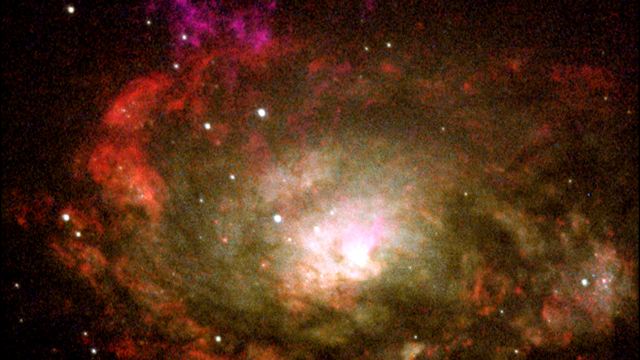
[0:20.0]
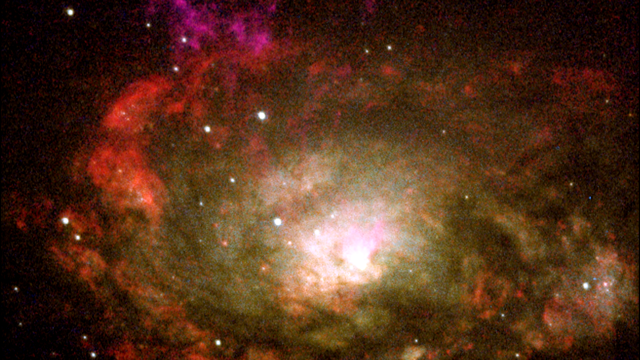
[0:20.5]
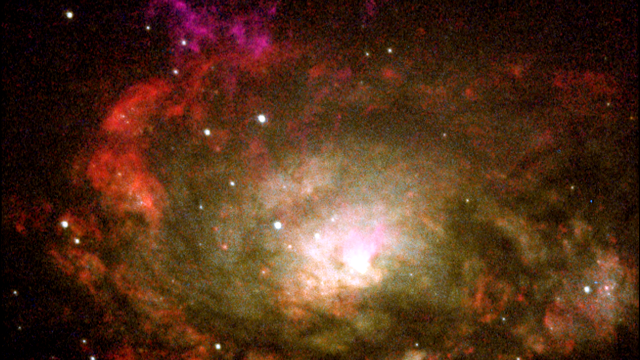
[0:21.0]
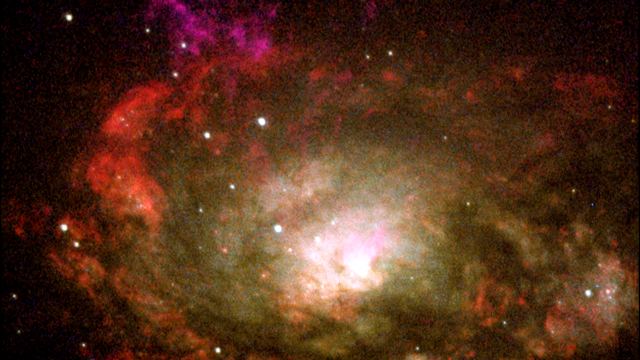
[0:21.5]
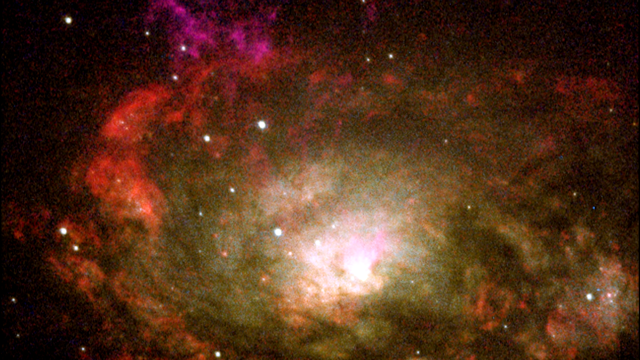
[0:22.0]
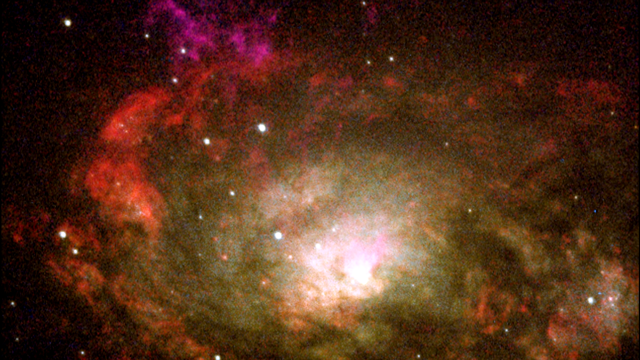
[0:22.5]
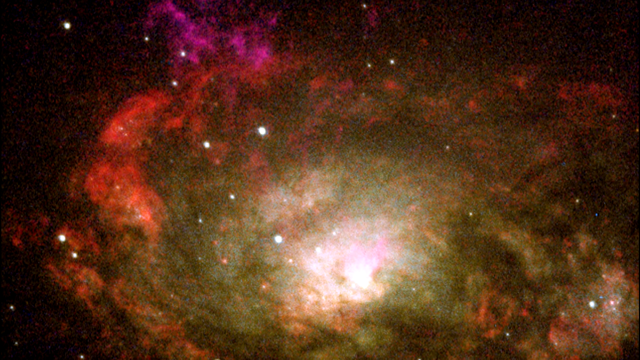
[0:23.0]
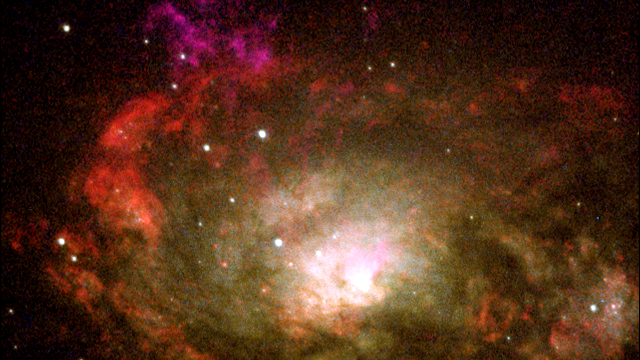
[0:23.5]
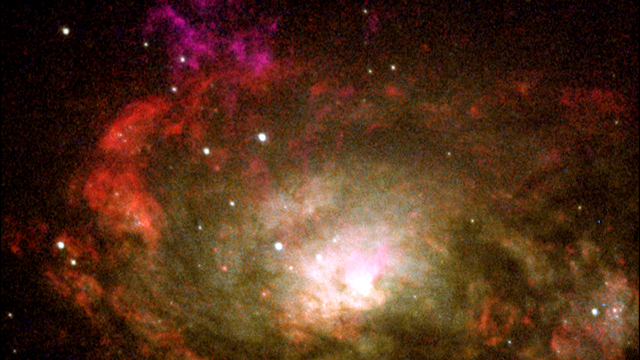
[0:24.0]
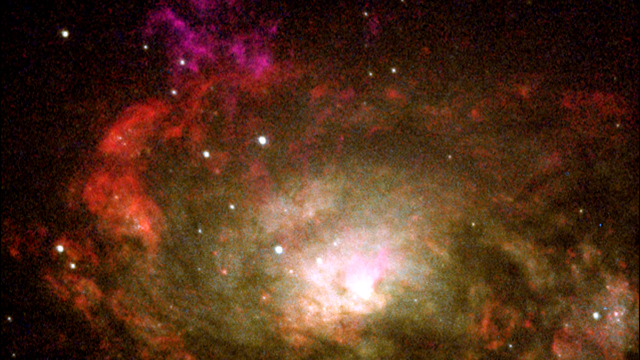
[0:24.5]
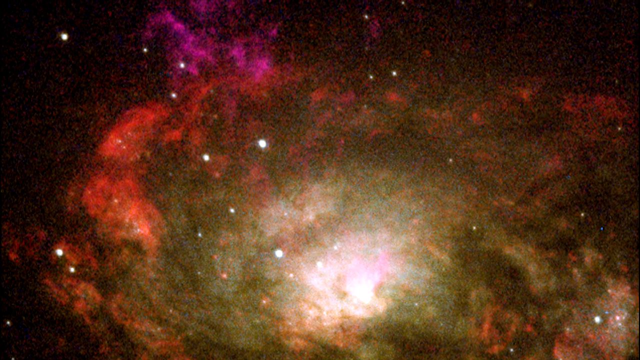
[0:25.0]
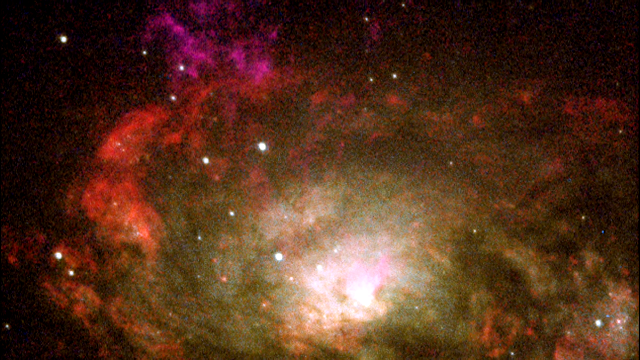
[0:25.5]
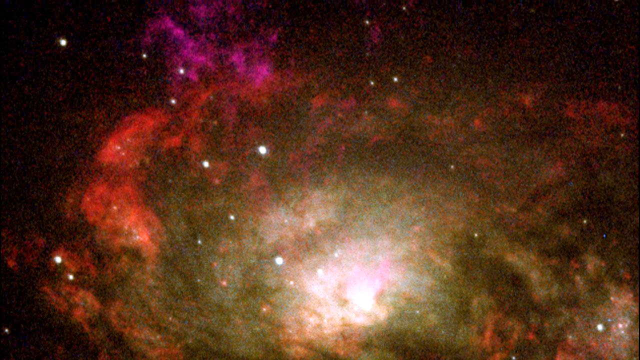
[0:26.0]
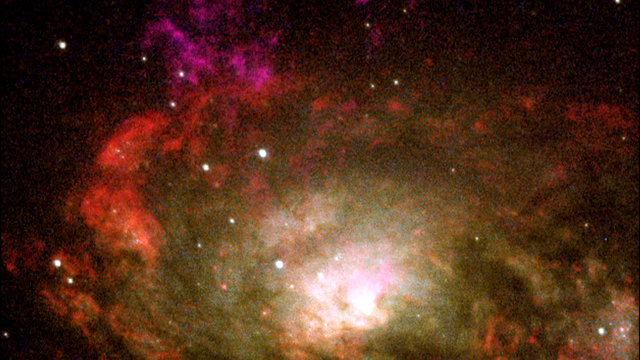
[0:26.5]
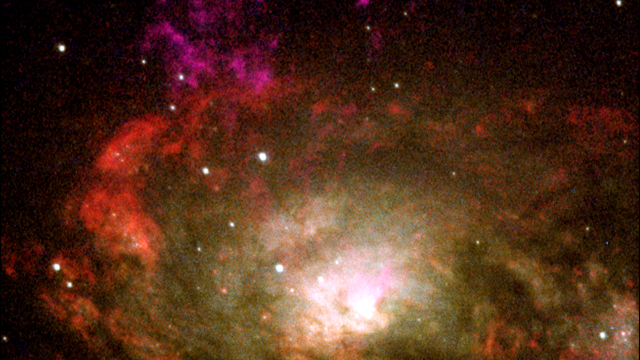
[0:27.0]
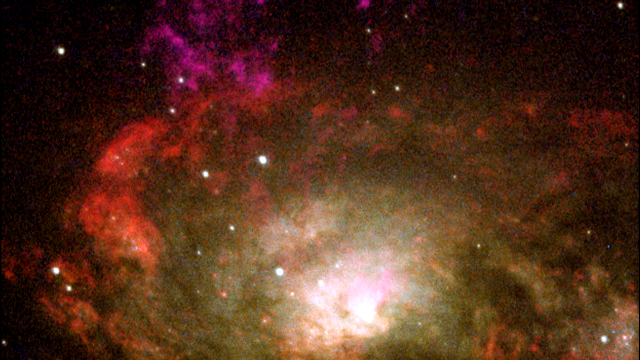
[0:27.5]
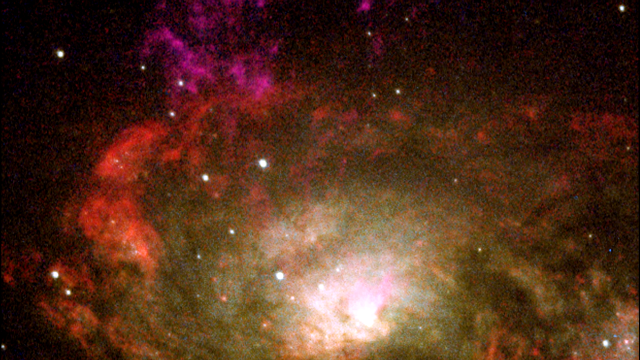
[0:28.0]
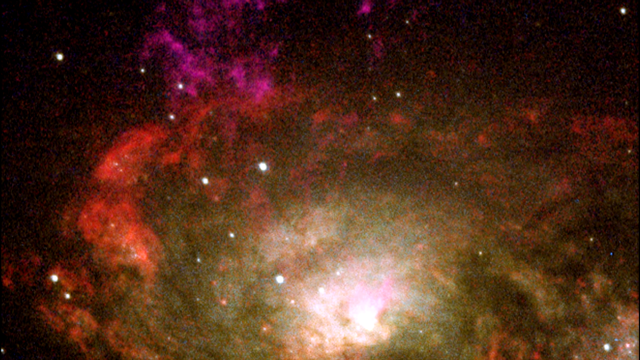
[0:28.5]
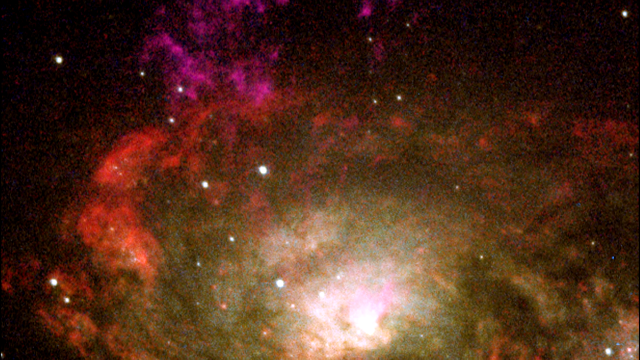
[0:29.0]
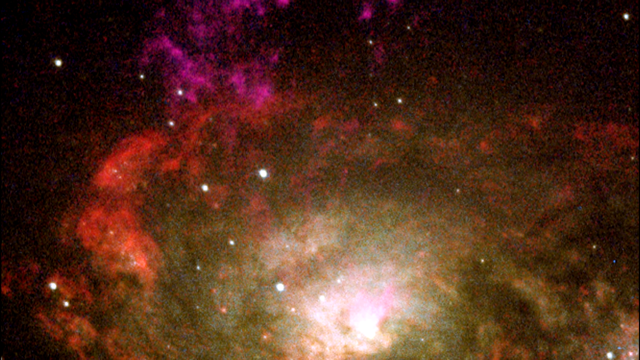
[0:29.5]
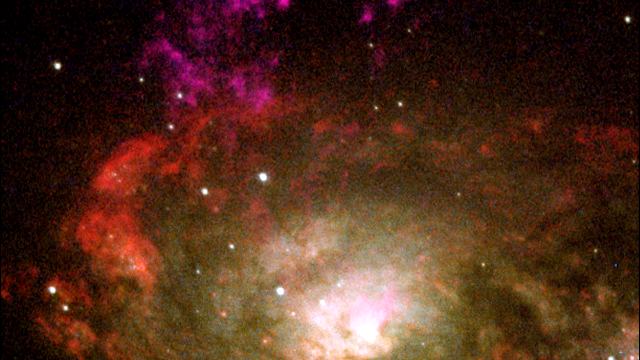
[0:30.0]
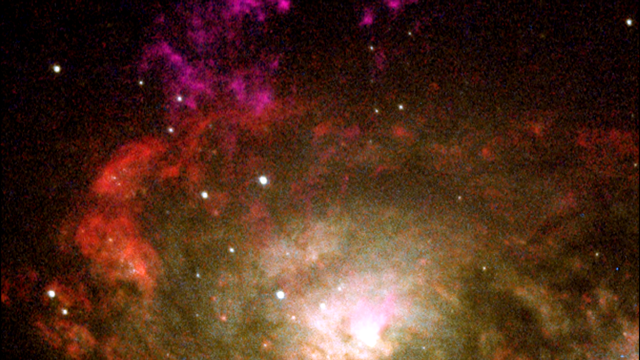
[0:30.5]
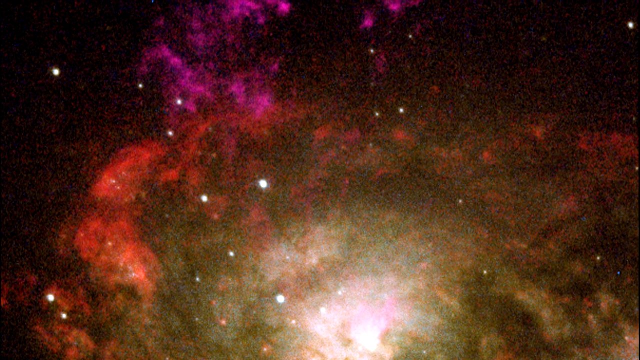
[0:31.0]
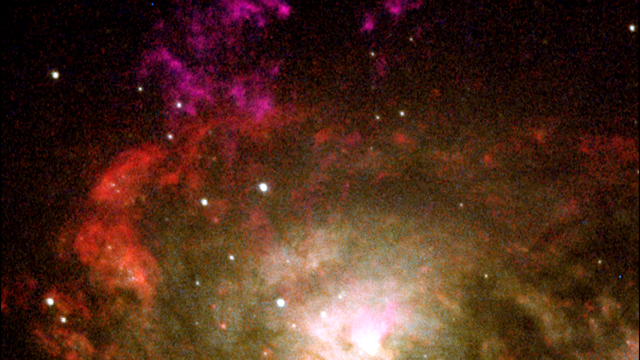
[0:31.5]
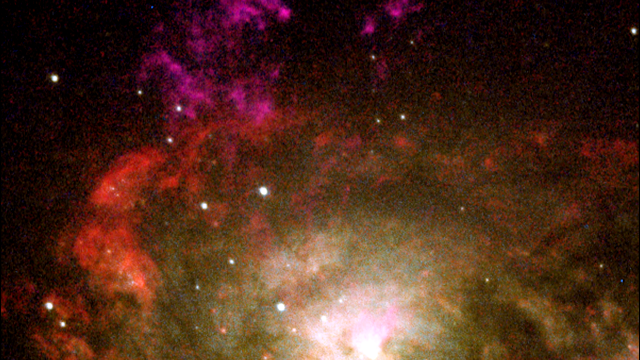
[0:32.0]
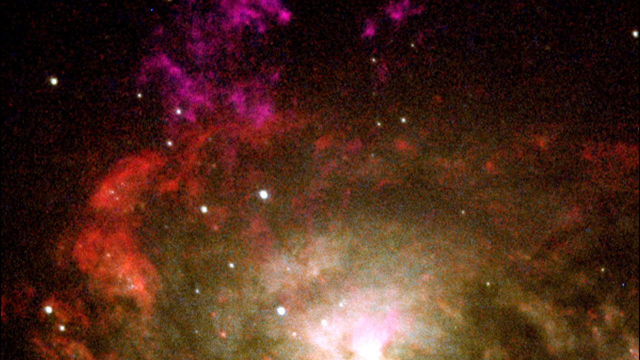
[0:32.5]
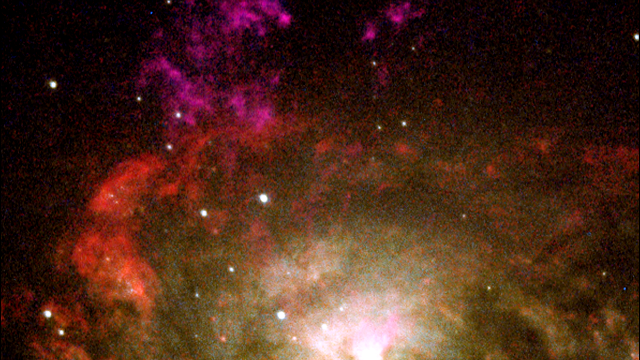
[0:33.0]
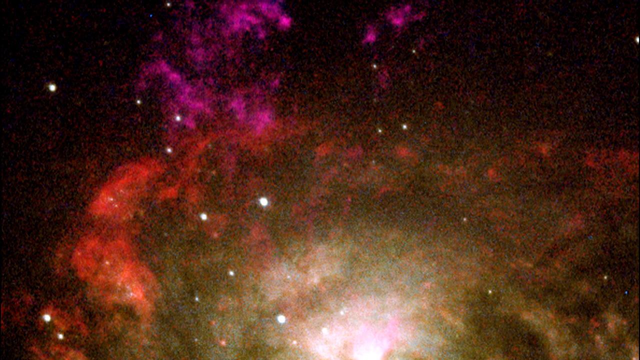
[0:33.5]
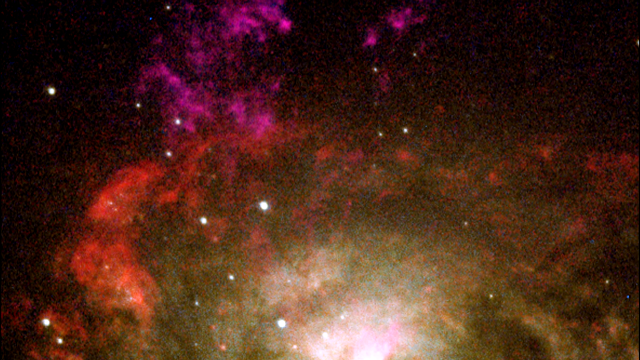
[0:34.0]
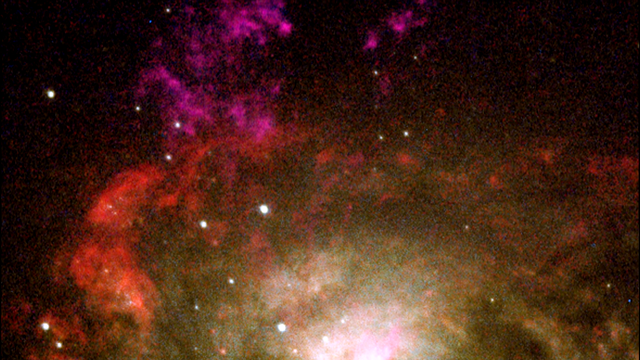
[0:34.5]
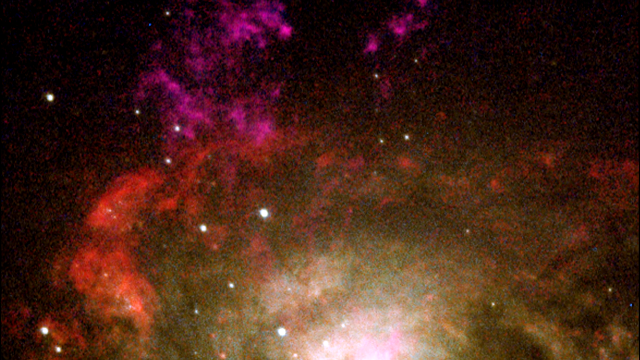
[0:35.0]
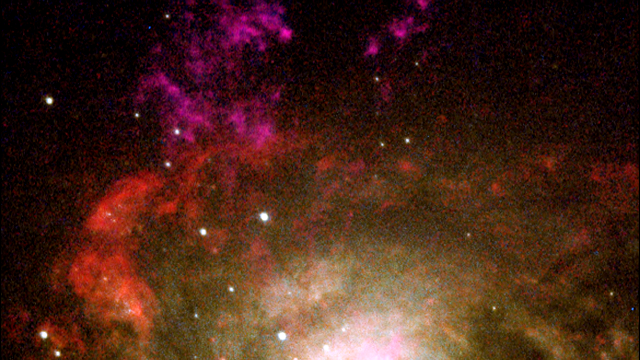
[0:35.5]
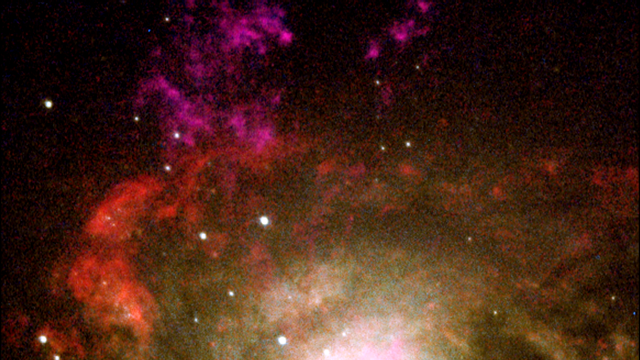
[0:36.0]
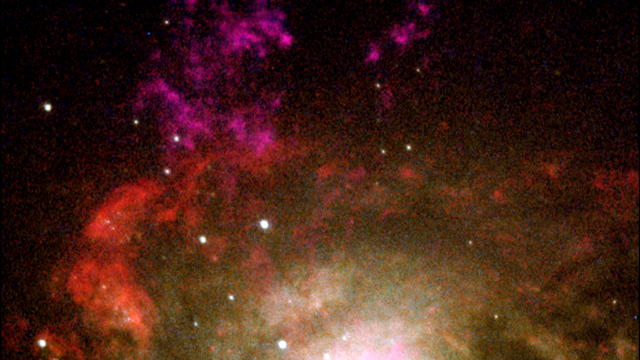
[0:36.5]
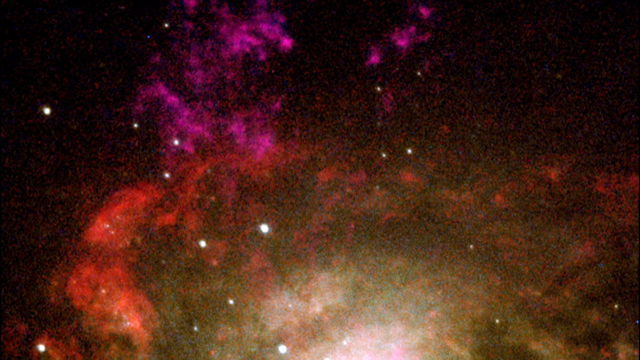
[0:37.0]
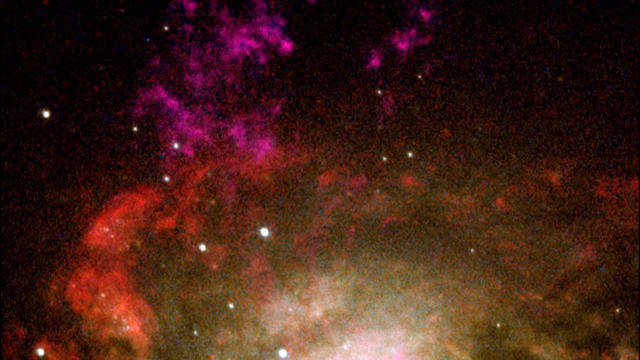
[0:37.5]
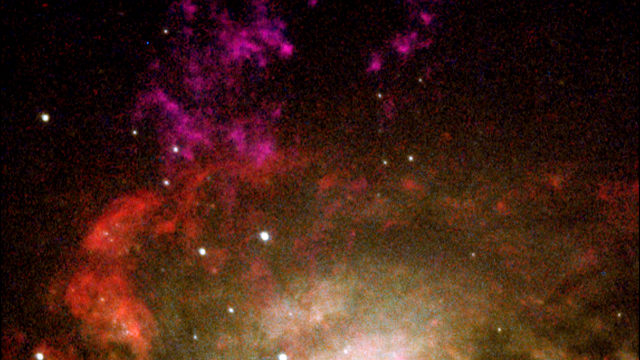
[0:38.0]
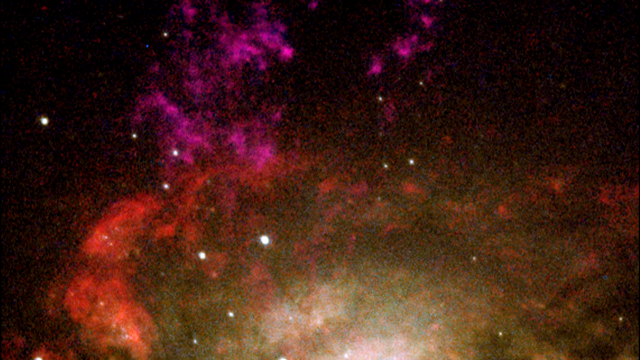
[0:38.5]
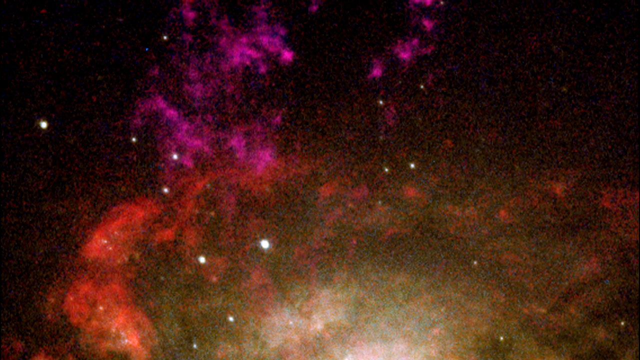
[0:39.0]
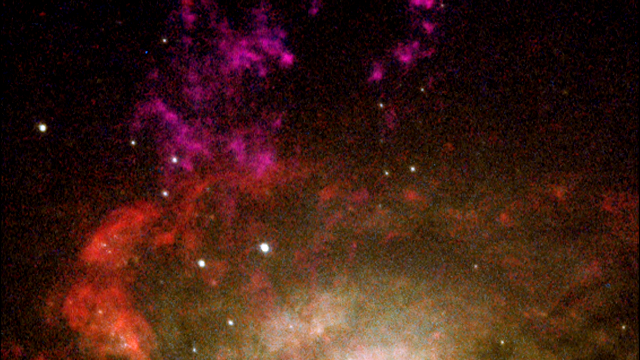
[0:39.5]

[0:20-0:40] The large cloud structure, which appears to be something found in the sky, continues to be shown. The cloud is still red around the edges with a darker internal part, while the core is still bright and seems to have a sort of pinky tinge. The image has moved upwards, and different parts are more noticeable. Right at the top of the cloud-like structure, a pink flame rises in a dramatic fashion. Lots of smaller bright dots are scattered through the image, which could be stars. Outside the cloudy structure it is dark black, representing space. The image isn't of the best quality, suggesting it may have been taken with a telescope. The video is quite slow and seems to capture just a part of the image.